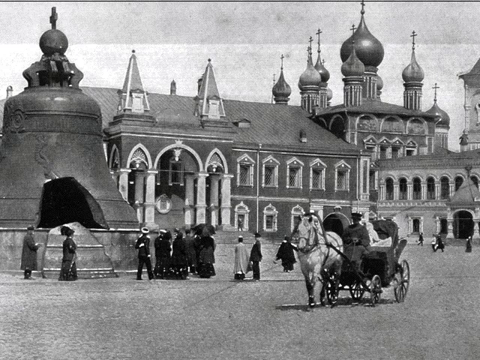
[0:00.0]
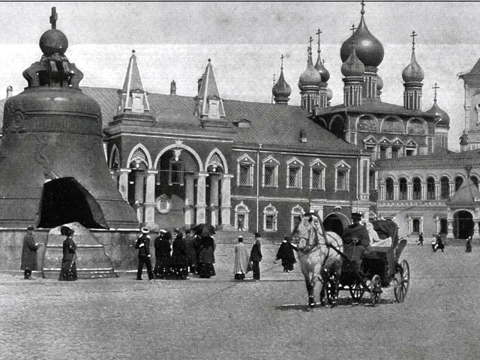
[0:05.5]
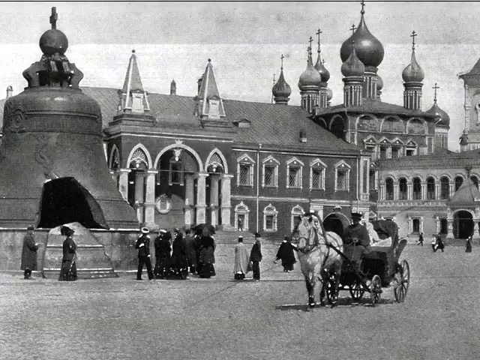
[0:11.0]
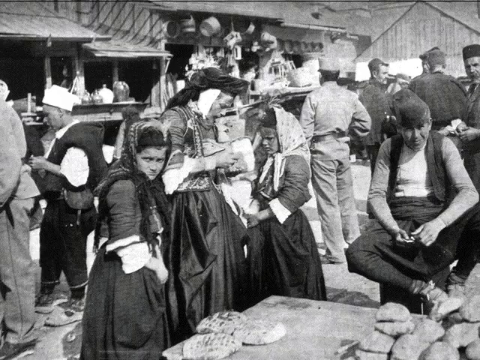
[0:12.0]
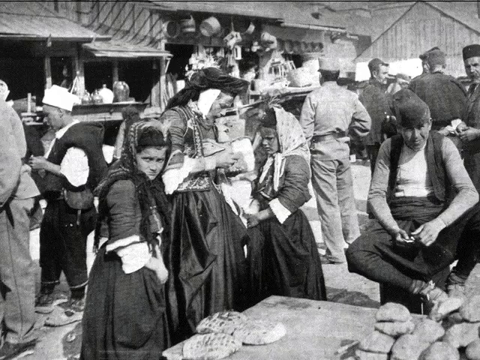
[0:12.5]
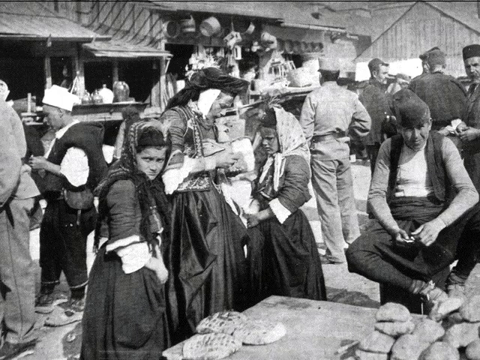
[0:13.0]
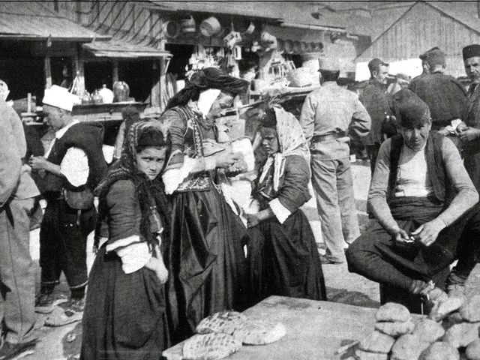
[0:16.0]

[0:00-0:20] A black-and-white picture shows what looks like people gathered around, about 10 of them in a huddle. A horse pulls some people in a buggy. In the background there appears to be a bell-shaped temple, along with two fairly large buildings; the house in the background has many windows. The next image shows various people gathered around, including a couple of children who both wear older-style uniforms and hoods. A woman in the middle has her mouth open, and more people are gathered in the background. This image is also black and white, and there seems to be an open building behind them. Both images look like they take place in the early 1900s.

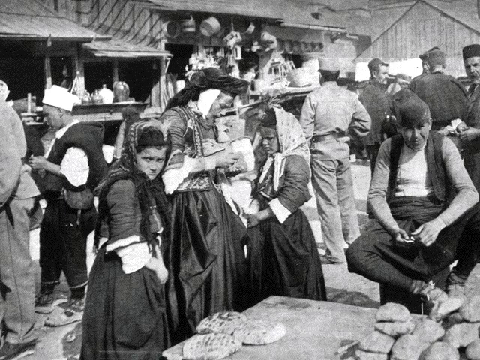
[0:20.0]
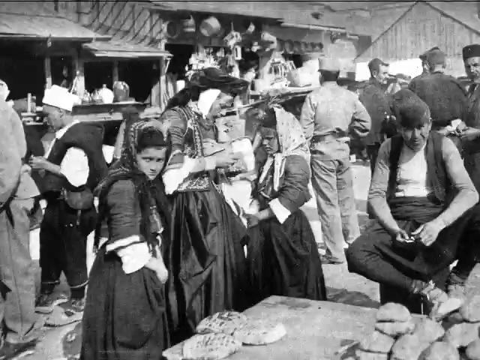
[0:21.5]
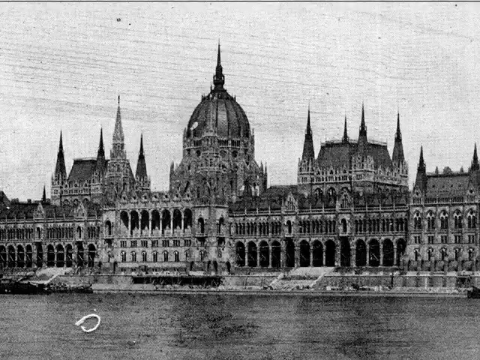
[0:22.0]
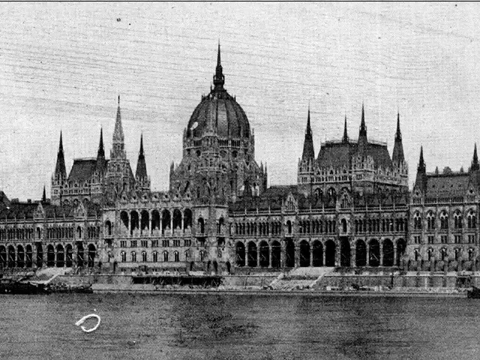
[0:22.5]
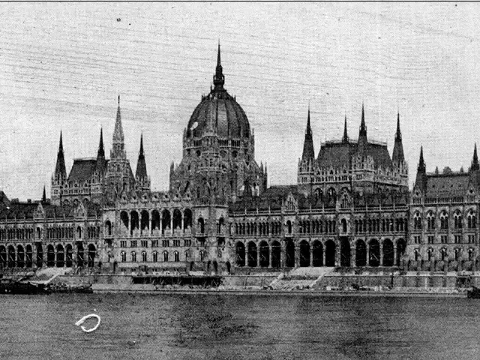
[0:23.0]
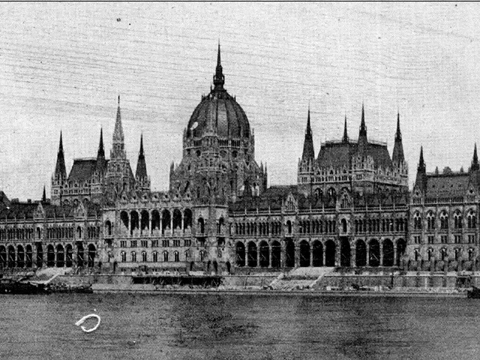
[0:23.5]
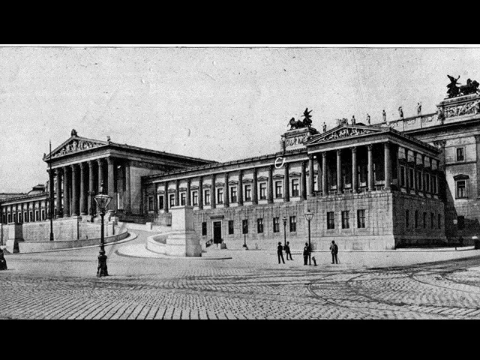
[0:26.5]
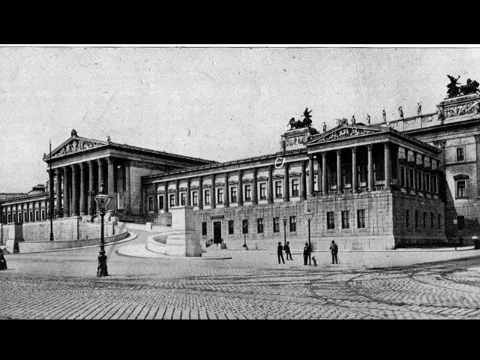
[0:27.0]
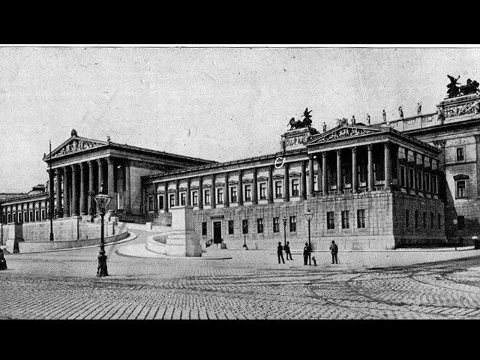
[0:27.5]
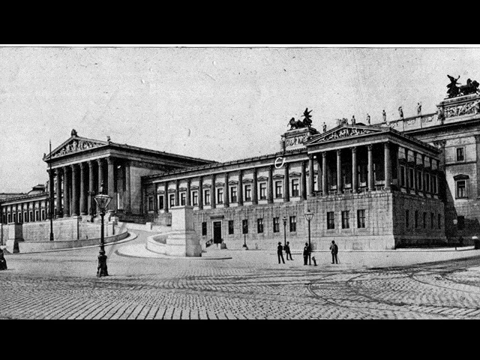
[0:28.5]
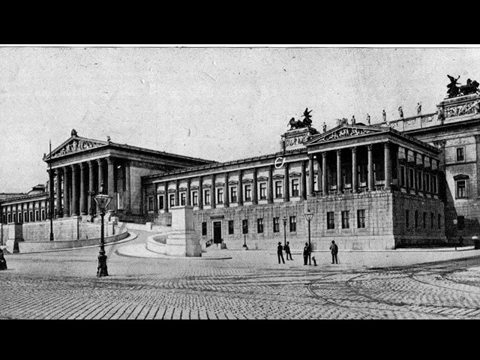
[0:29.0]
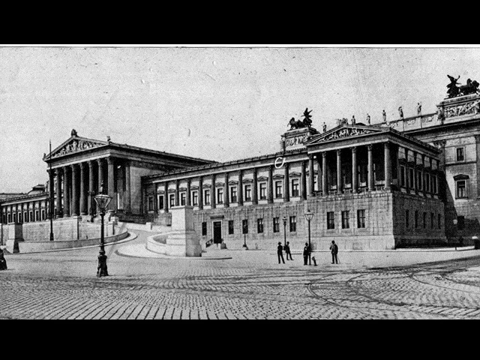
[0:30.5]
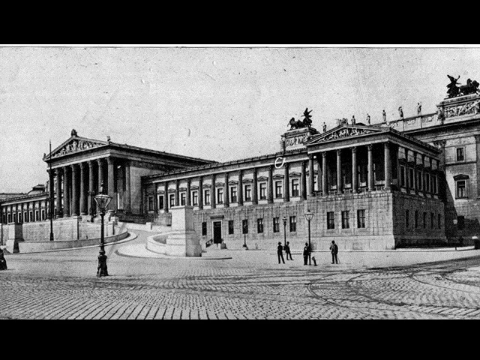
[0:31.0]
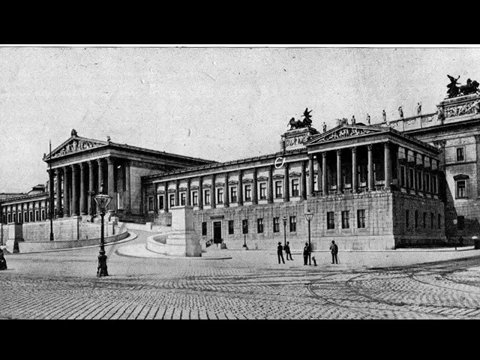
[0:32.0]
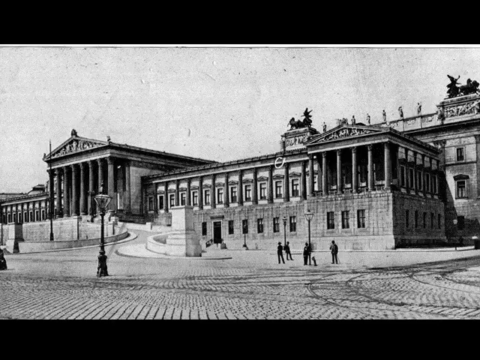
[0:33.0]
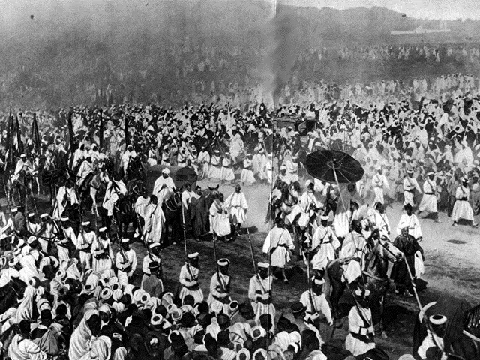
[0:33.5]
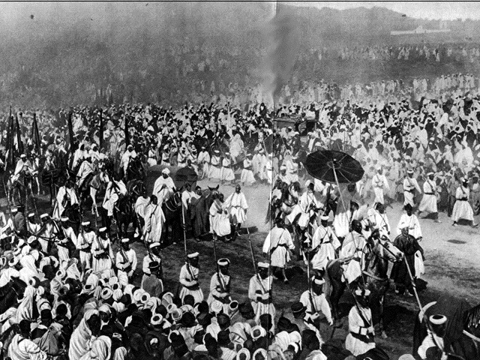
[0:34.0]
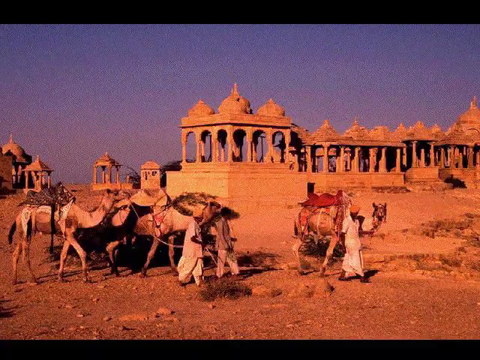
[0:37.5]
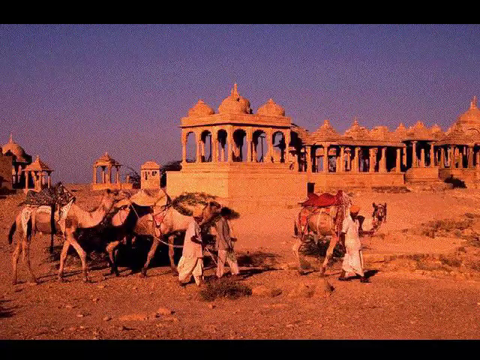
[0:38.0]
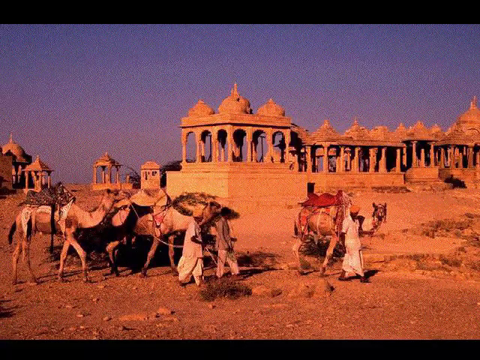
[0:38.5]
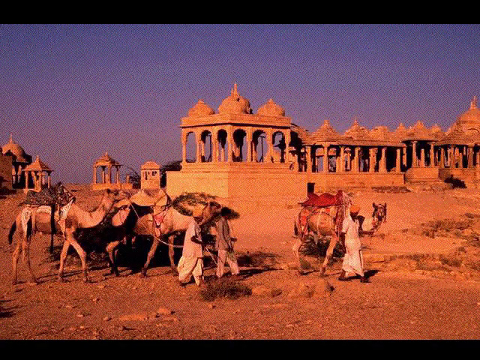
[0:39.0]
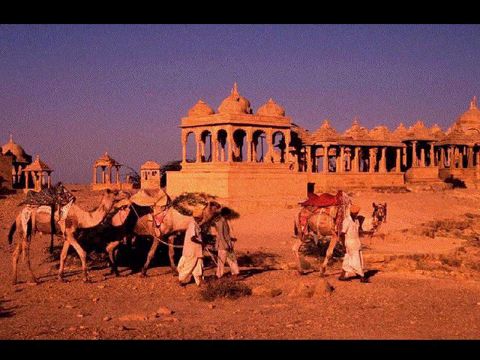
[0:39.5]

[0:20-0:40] A black-and-white image shows a very large historic building, with what looks like a body of water below. The building stretches from one side of the image to the other, and the highest part of the roof is a sphere shape with a long pointed top, so it looks like a castle. The next image, also black and white, appears to be outside a courthouse. The middle of the building is held up by pillars, and four people, very far away, are gathered outside the building. The next image shows hundreds of people gathered around, many of them dressed in white robes. There appear to be people with weapons, and there seems to be a lot of commotion. The background at the top of the screen is very foggy and not clear at all.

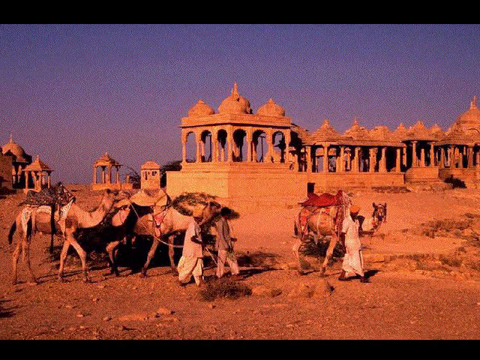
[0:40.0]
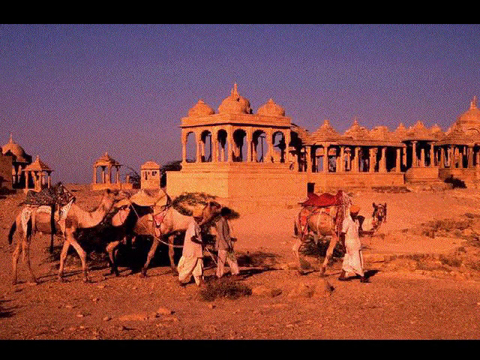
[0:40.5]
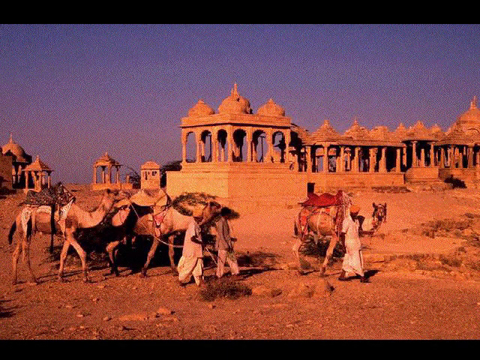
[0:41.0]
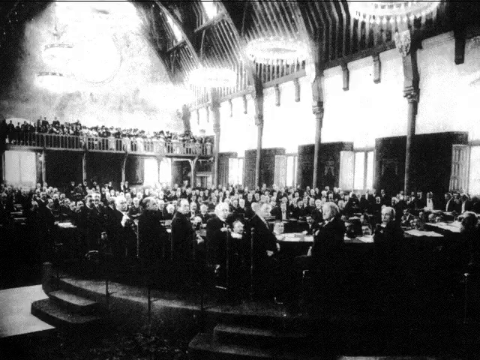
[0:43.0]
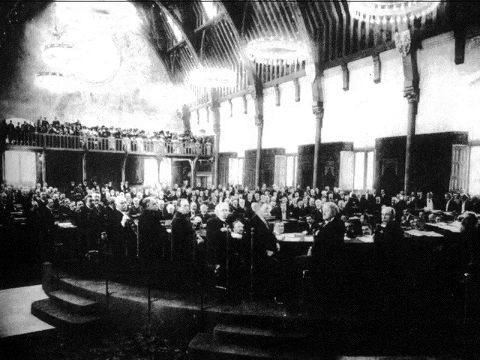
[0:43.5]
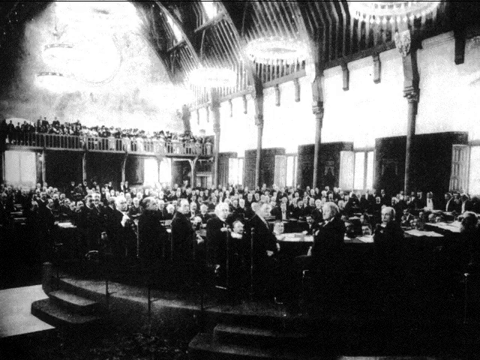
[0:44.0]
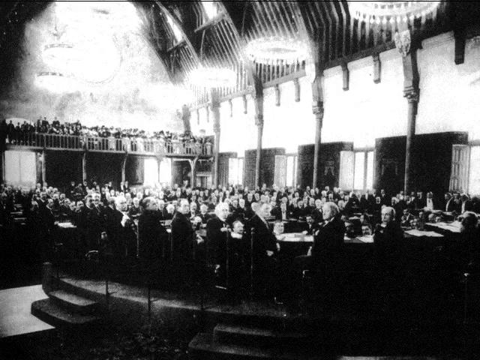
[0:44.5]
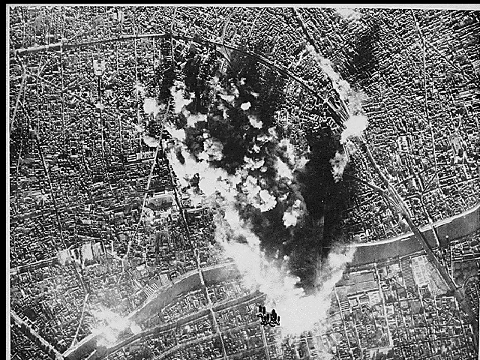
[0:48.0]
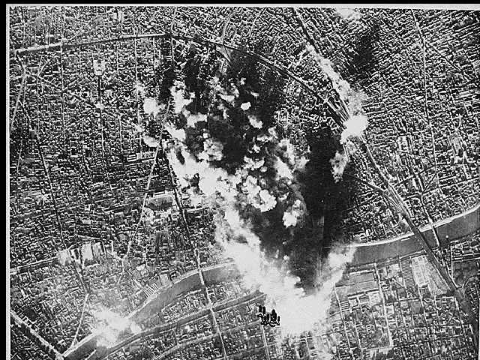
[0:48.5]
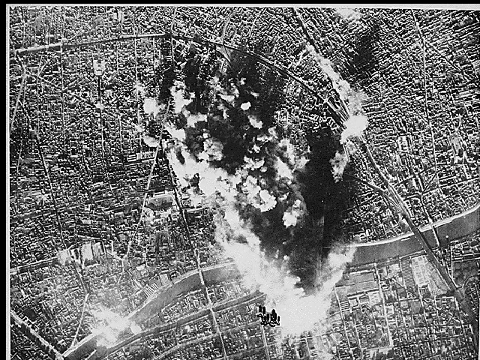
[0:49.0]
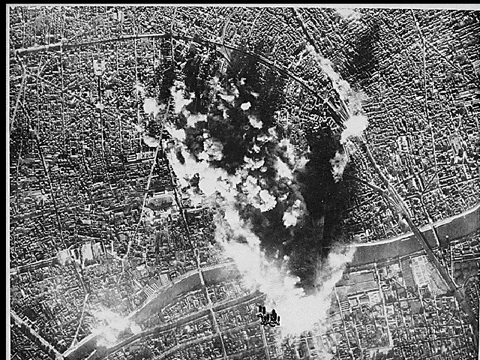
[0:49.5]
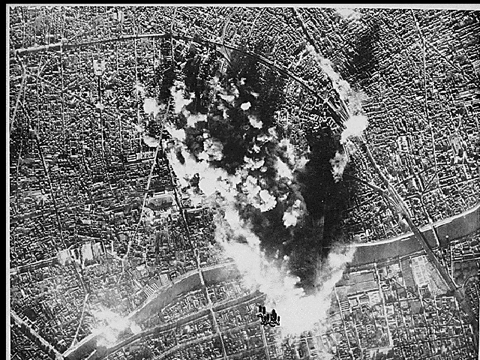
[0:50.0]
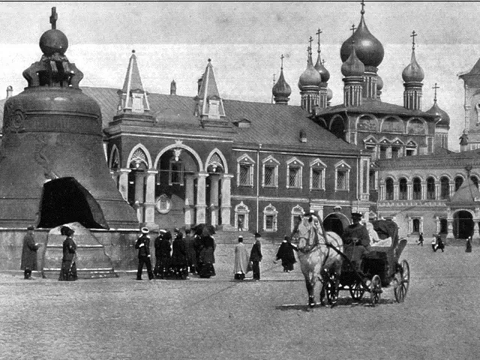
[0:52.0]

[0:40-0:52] A color picture shows what looks like three people walking a couple of camels through the desert. The ground is orange, there are some open temples in the background, and the sky above is blue; the scene looks like it could be in the Middle East. The next image is black and white and shows many people, apparently behind a desk, with many bystanders in the background and an upper level with a fence that also has many people along it. One more image shows what looks like a bunch of explosions down below, with nothing but smoke. The view is so high up, looking downward, that it is hard to determine exactly what it is; there appears to be a great deal of smoke and explosions in the very center of the screen.